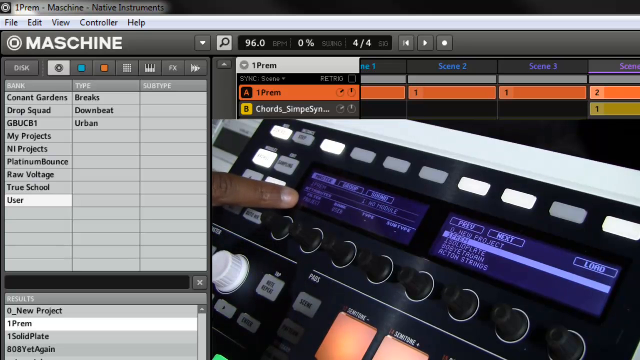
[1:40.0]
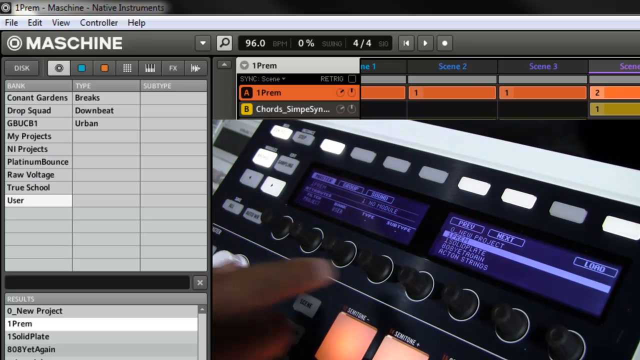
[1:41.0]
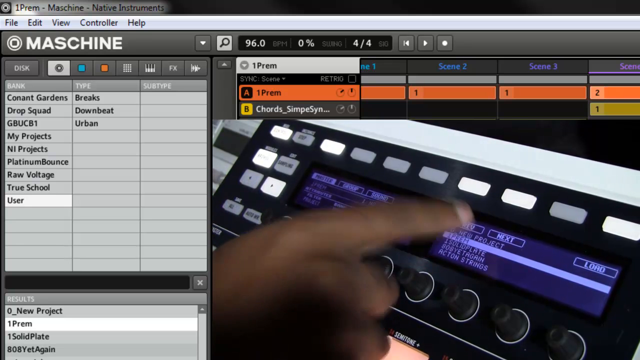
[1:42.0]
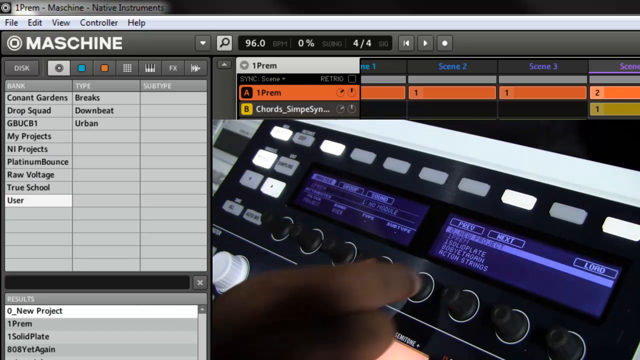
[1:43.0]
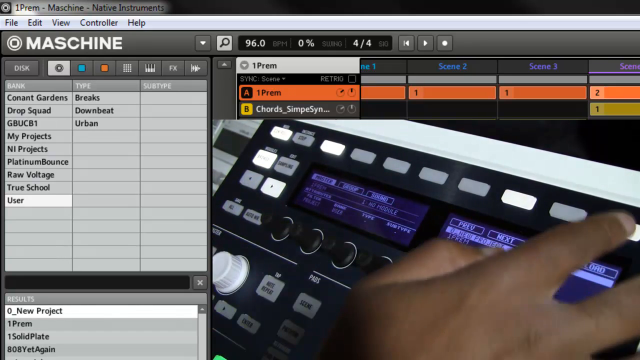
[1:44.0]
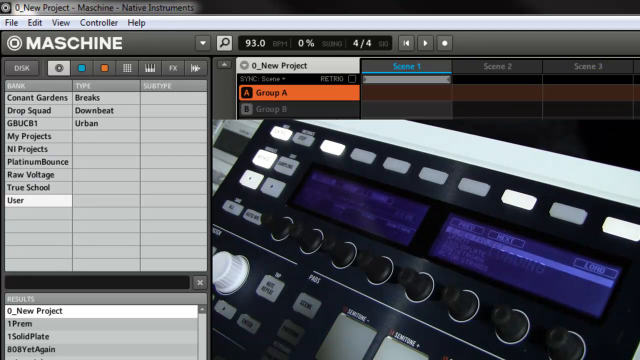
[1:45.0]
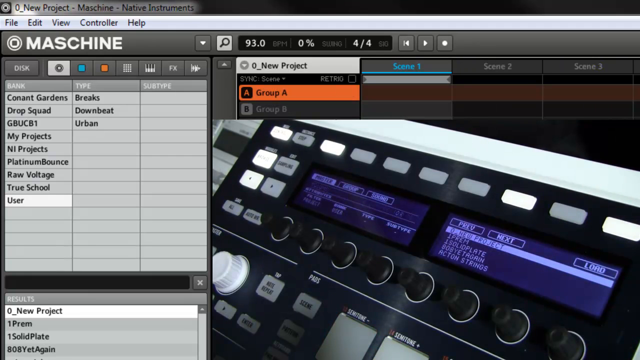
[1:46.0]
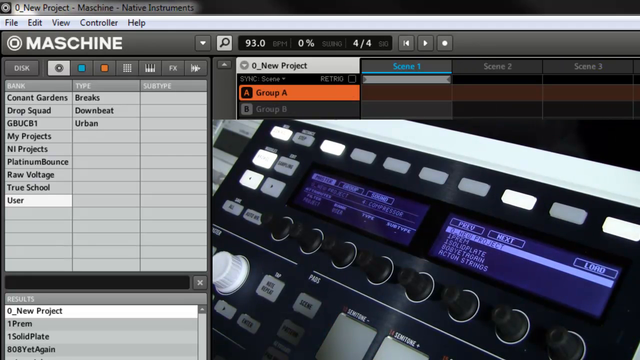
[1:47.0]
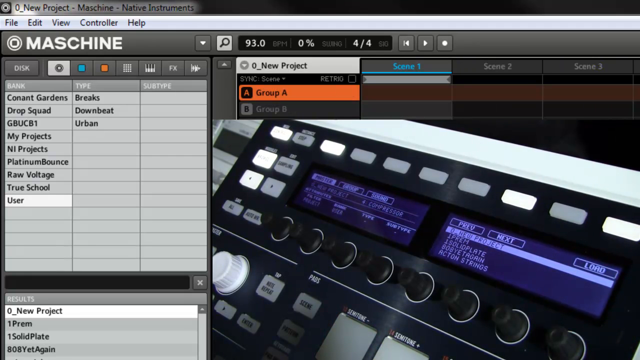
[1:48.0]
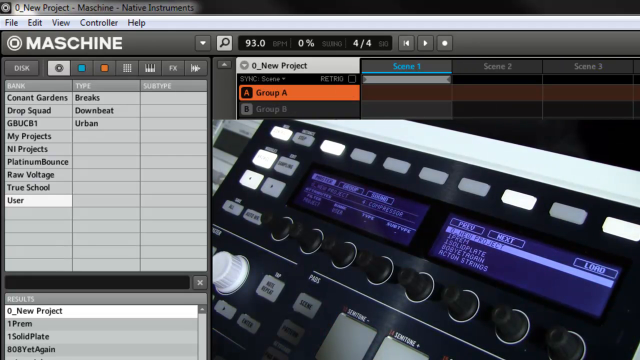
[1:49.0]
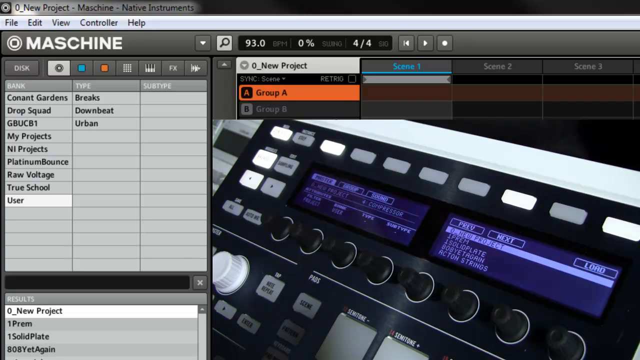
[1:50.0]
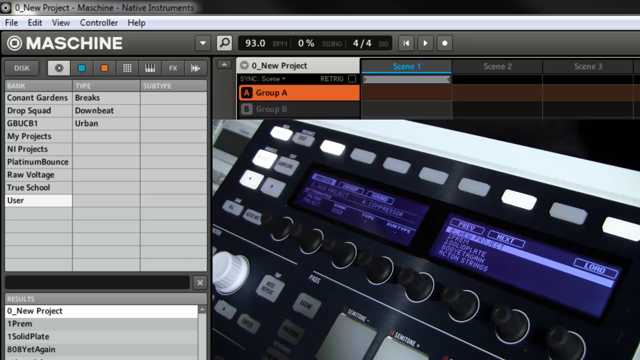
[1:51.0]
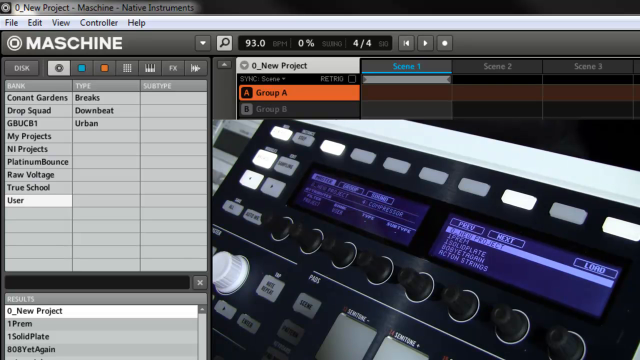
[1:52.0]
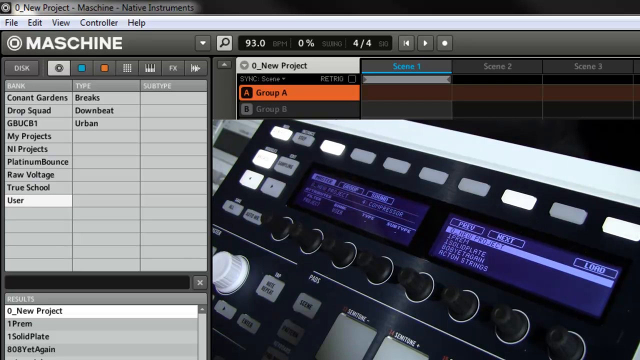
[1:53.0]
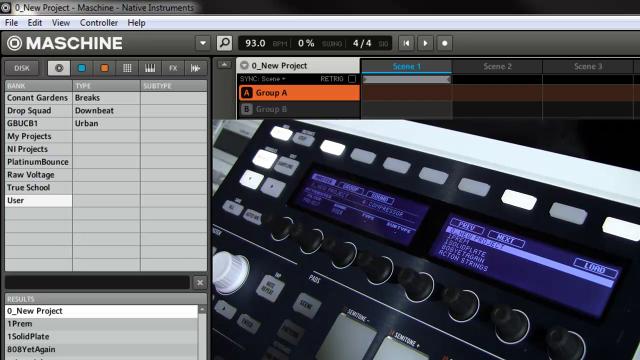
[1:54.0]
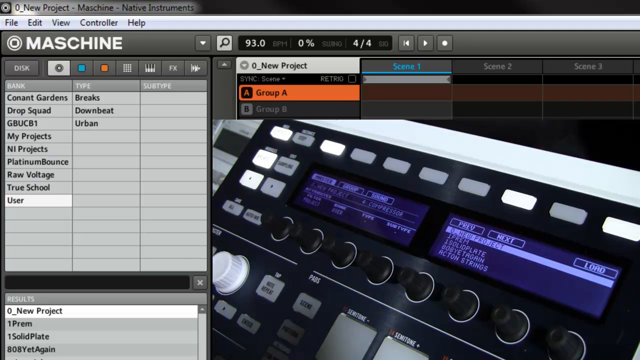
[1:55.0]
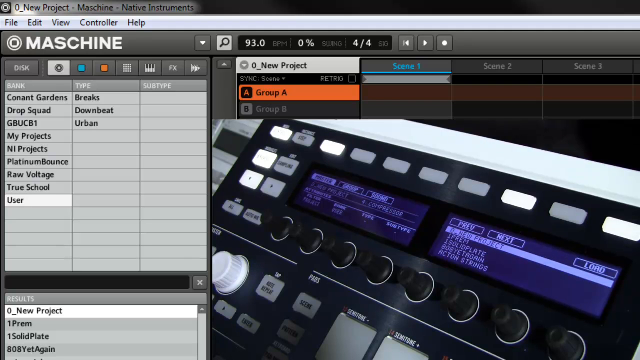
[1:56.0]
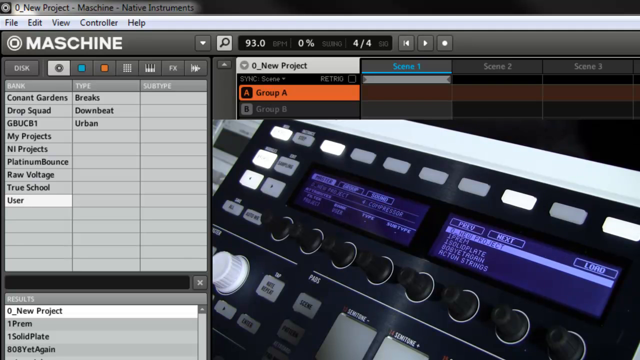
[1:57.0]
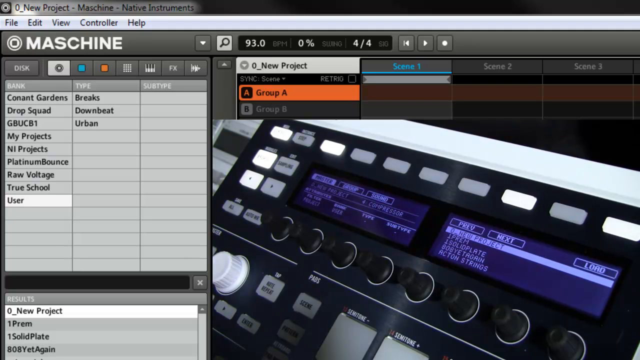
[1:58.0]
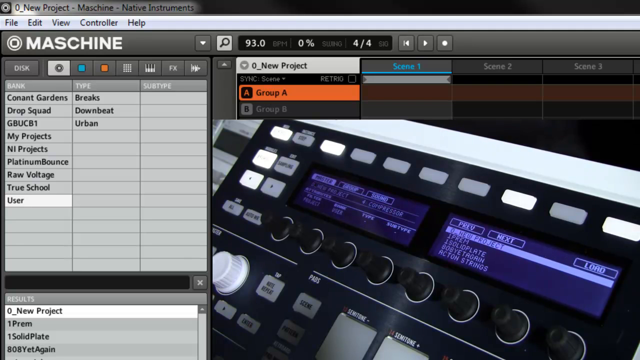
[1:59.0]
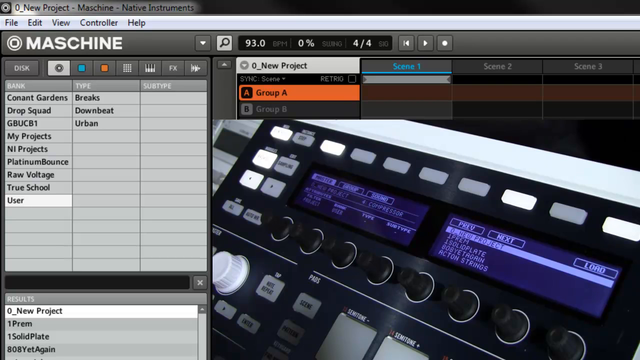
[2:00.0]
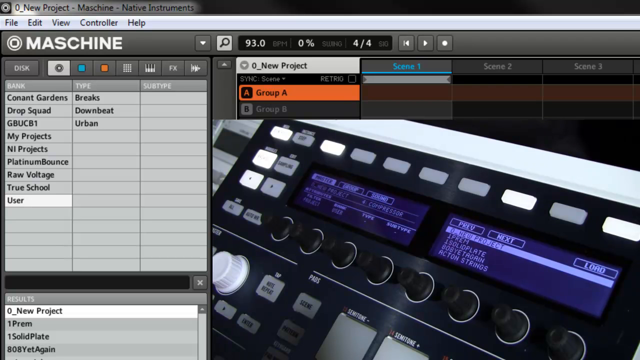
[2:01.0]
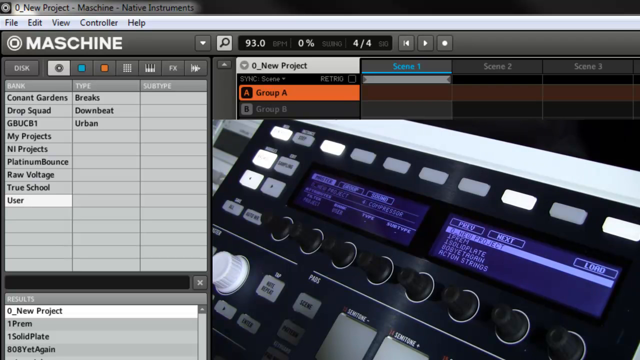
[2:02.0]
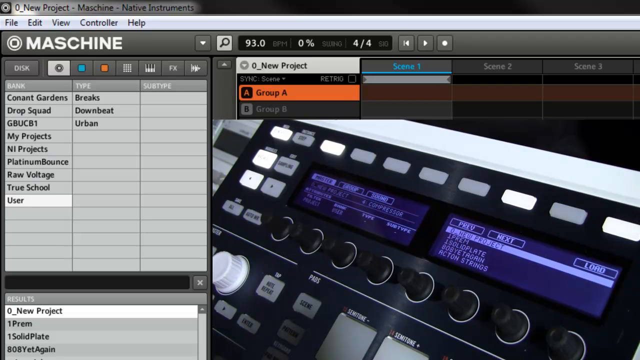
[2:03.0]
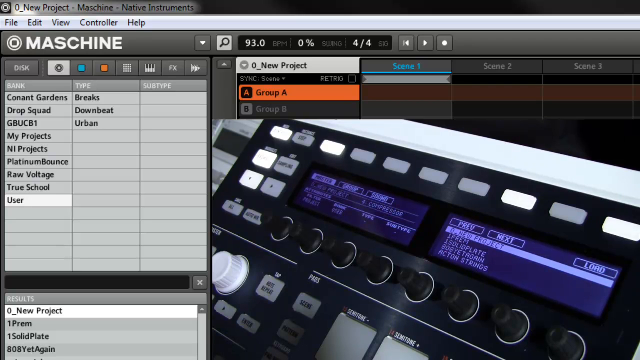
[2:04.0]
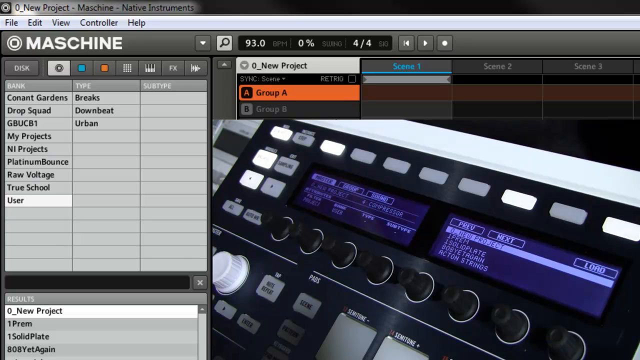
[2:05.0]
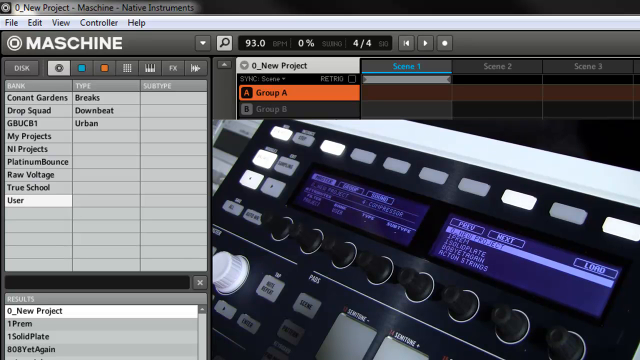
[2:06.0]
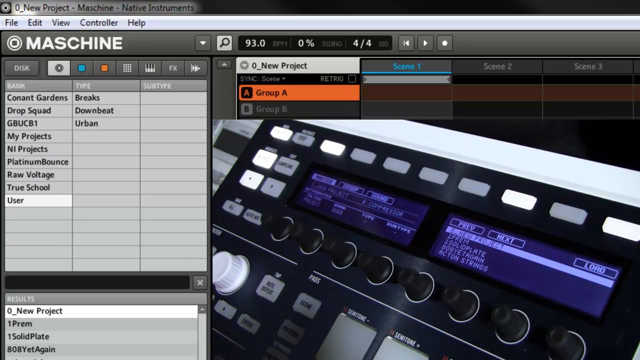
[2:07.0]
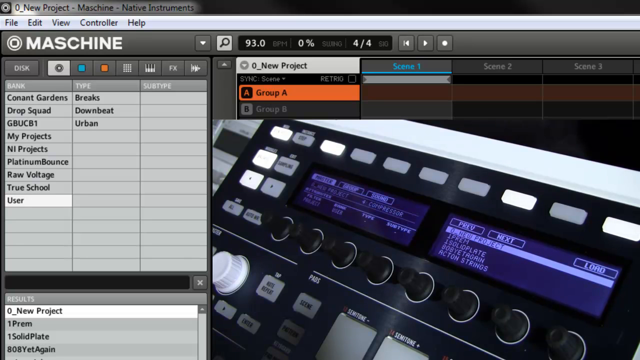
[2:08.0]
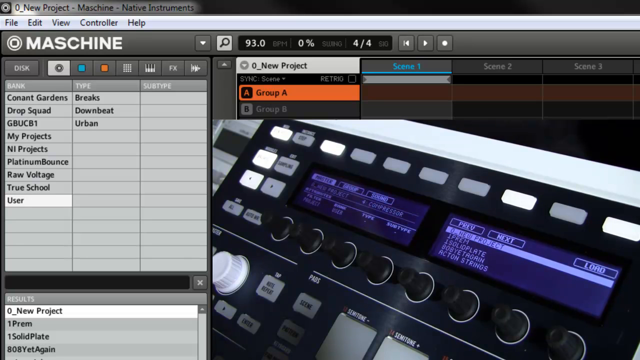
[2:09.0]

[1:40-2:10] The software and the video of the device continue to be shown. A finger is visible from the left side of the screen, pointing to the left screen on the console, and is then withdrawn toward the left. The hand goes back in to point to the screen on the right, adjusts one of the knobs below the screen very slightly, points back to the screen, and then goes up to the right to touch the button above the screen. It is withdrawn from view, and the screens on the device change their content. For a few moments no other actions seem to be taken. In the background, the spreadsheet seems to have reverted to its default state, with the left column showing just the standard placeholder text.